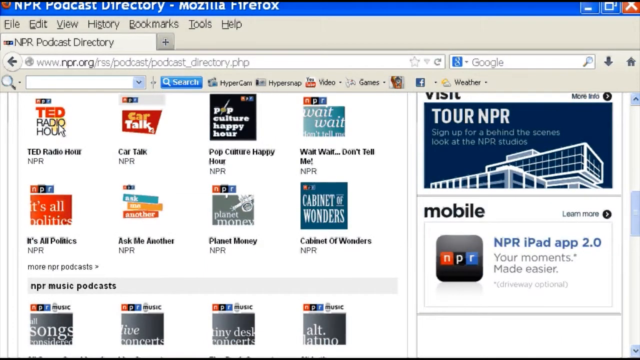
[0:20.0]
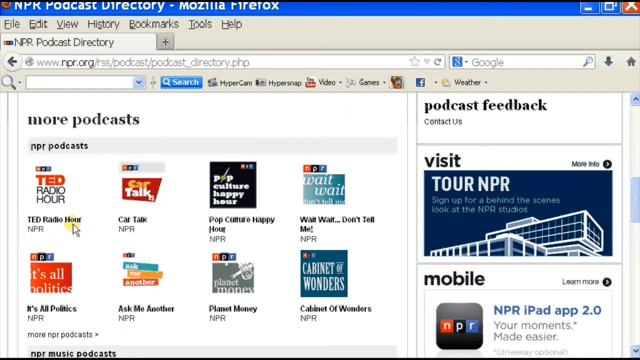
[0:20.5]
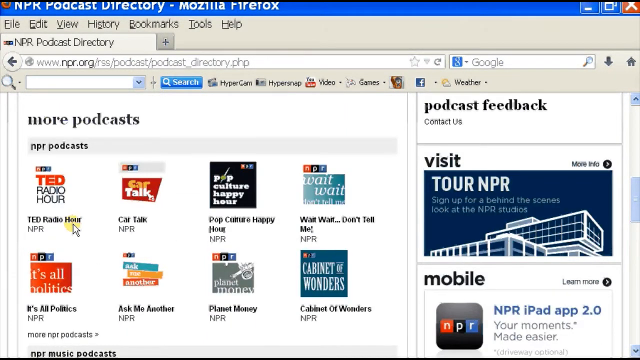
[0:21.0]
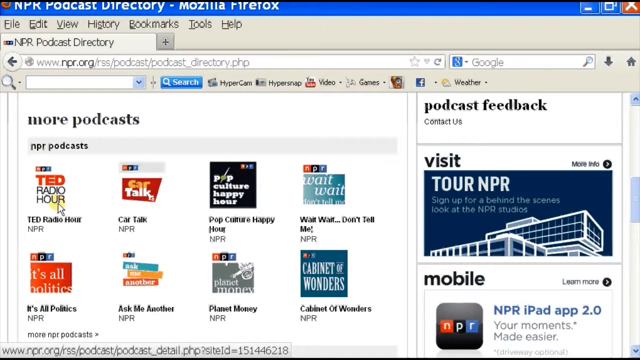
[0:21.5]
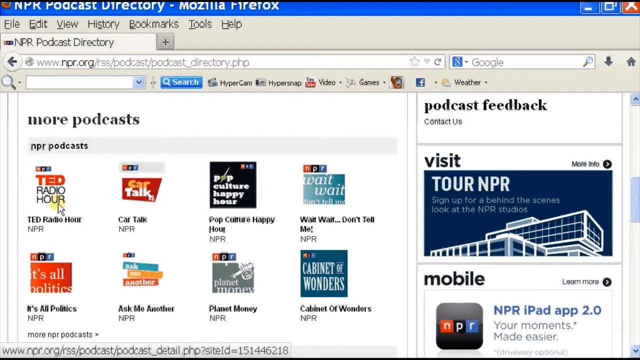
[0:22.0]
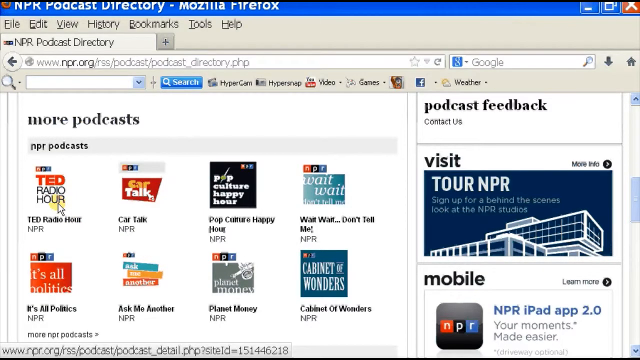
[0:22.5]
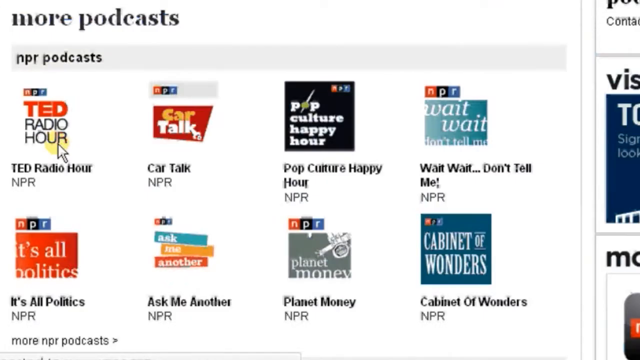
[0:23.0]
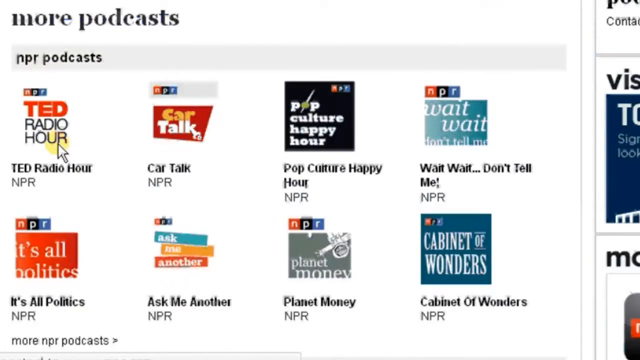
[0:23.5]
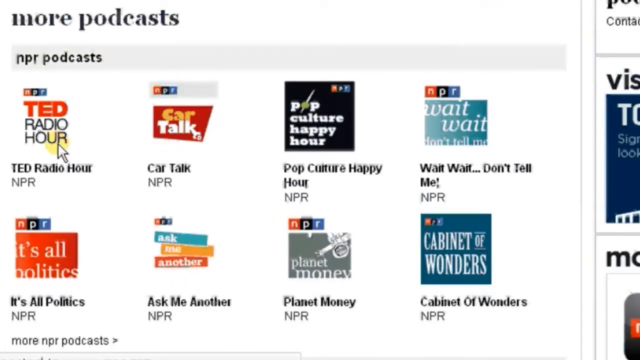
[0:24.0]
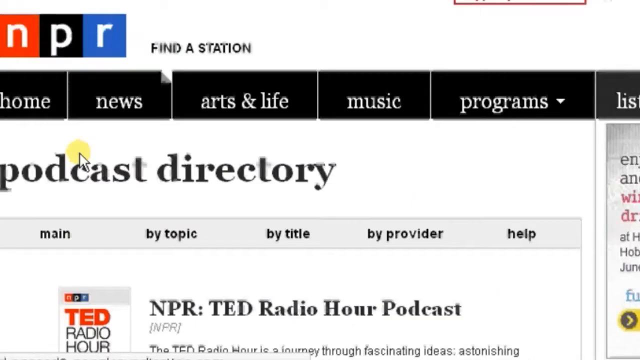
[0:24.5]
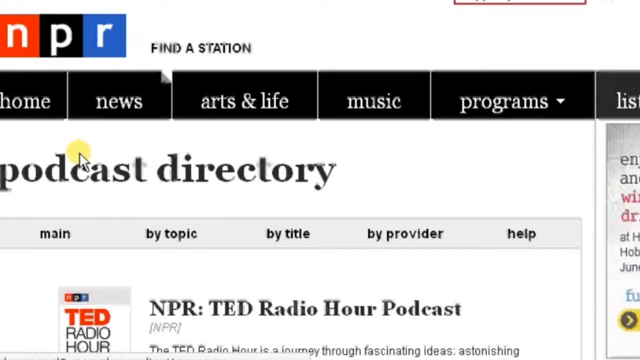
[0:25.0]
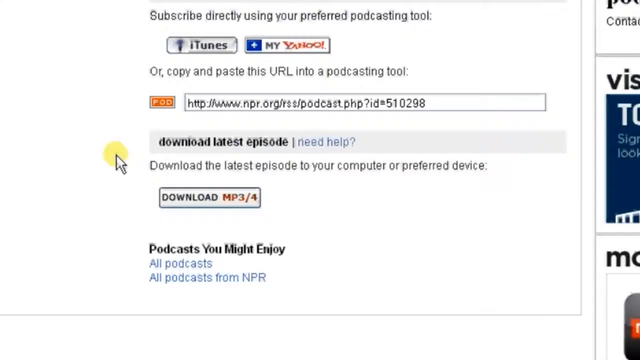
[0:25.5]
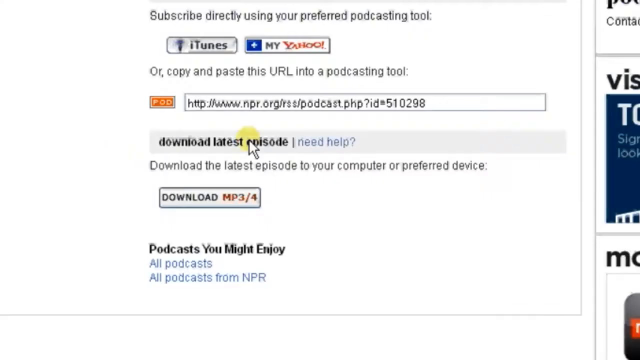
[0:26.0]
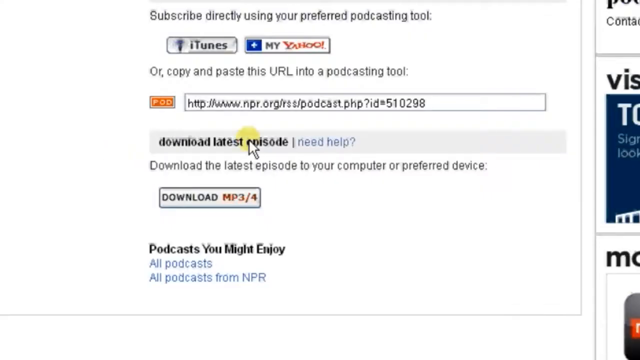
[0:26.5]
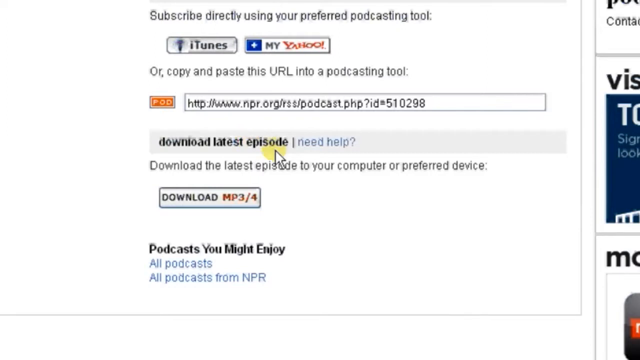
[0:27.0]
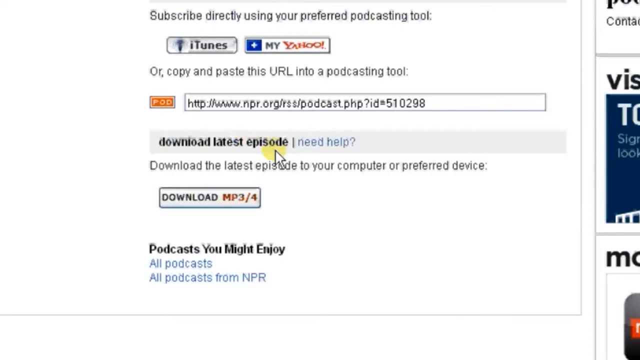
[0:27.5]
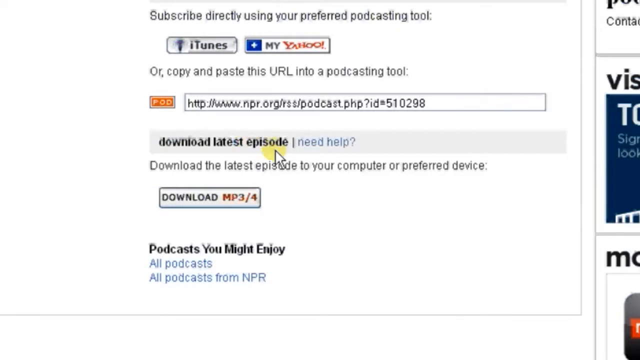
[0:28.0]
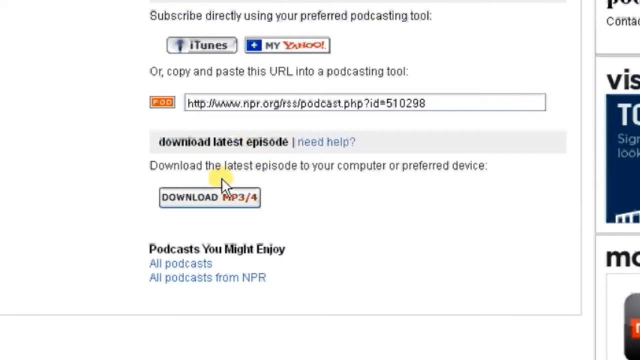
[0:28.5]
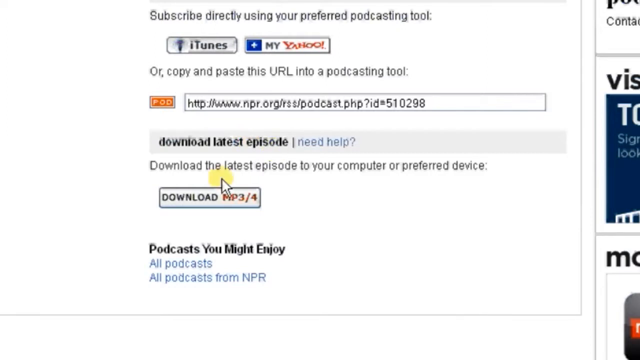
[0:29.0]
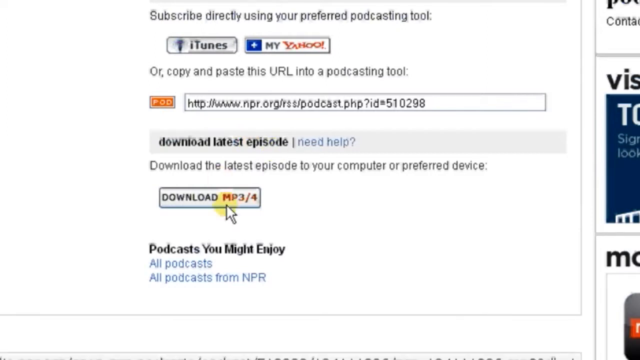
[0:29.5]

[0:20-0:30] A user is on the NPR podcast directory website in Mozilla Firefox. The podcasts listed include TED Radio Hour, Car Talk, Pop Culture Happy Hour, Wait Wait Don't Tell Me, It's All Political, Ask Me Another and Planet Money. The user seems to be scrolling through the page and is possibly going to focus on TED Radio Hour. Another screen appears that says "subscribe directly using your preferred podcast tool iTunes or my Yahoo", with another option to "copy and paste your URL into the podcast tool". The cursor hovers over download latest episodes, where an MP3 or MP4 can be downloaded. The user appears to go back to the main page without downloading anything yet.